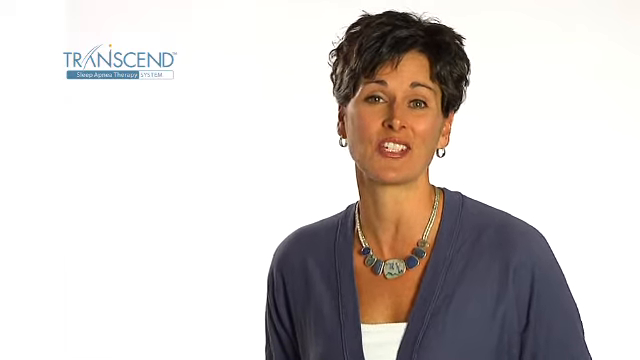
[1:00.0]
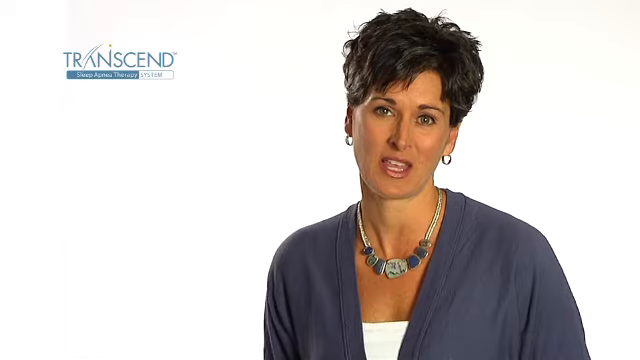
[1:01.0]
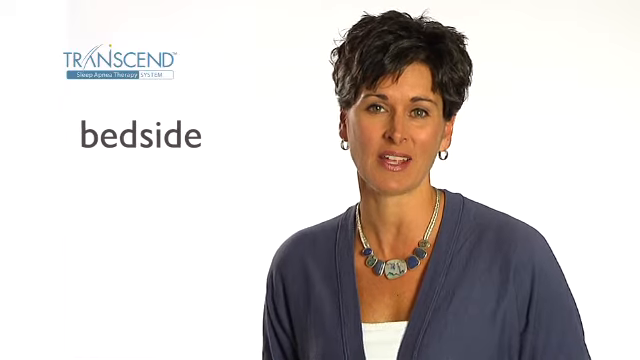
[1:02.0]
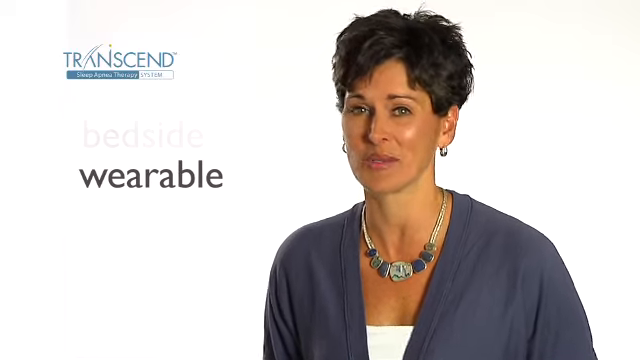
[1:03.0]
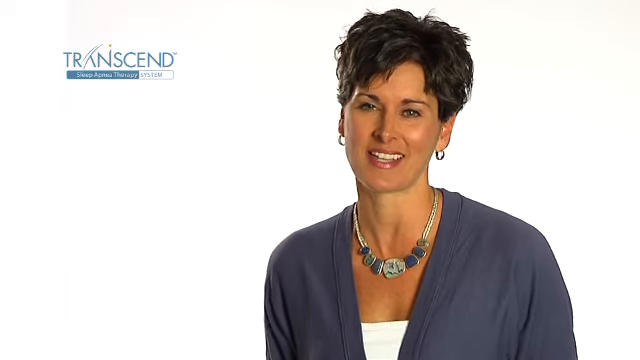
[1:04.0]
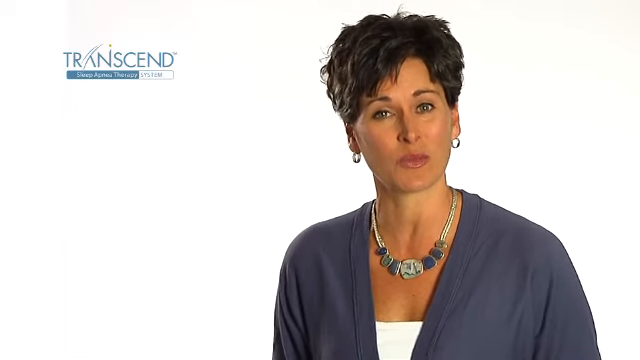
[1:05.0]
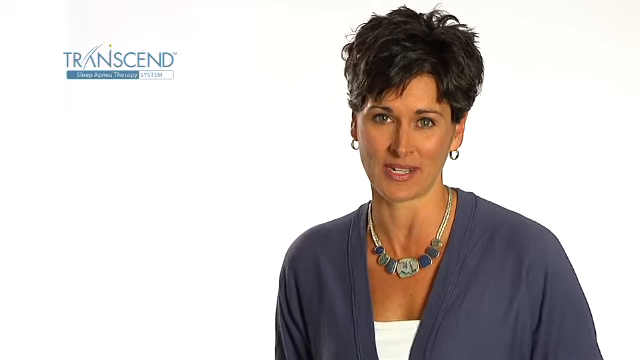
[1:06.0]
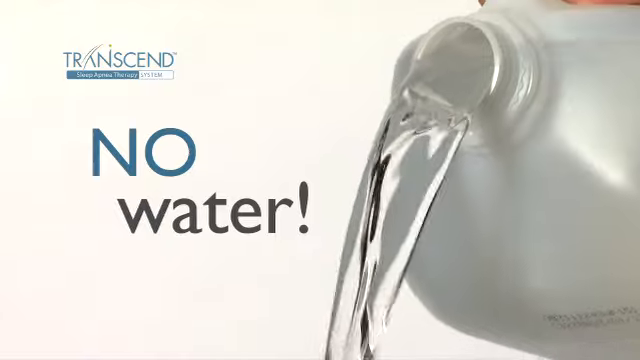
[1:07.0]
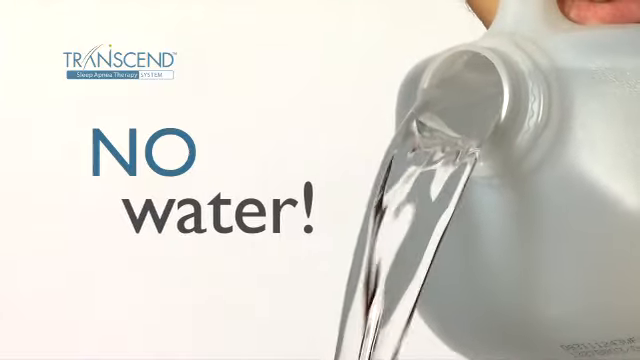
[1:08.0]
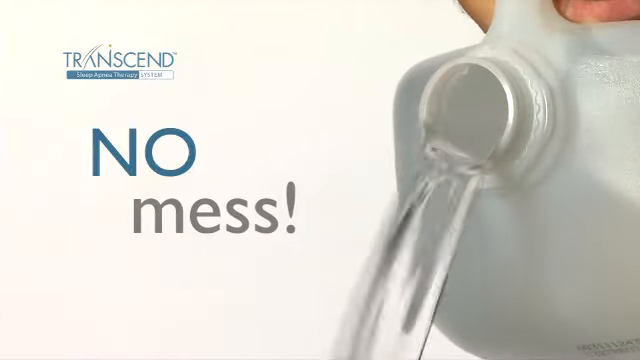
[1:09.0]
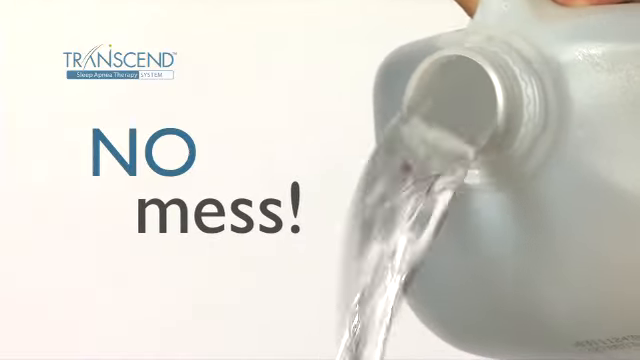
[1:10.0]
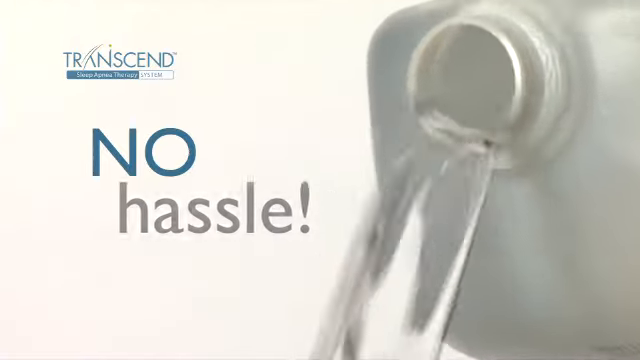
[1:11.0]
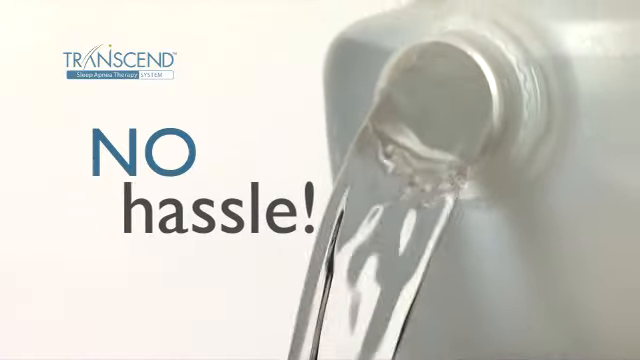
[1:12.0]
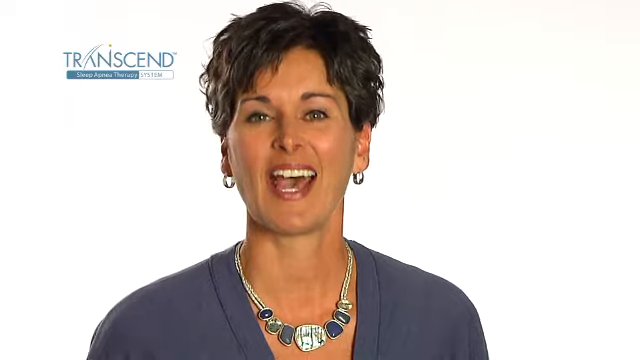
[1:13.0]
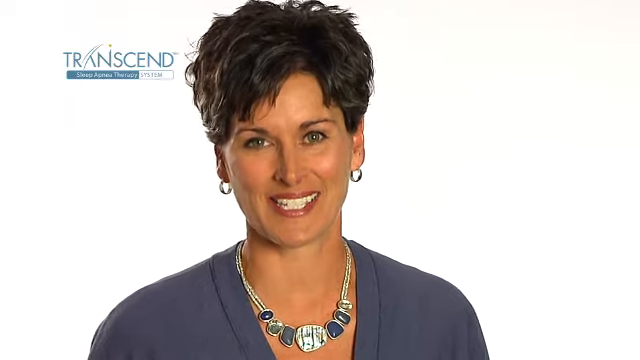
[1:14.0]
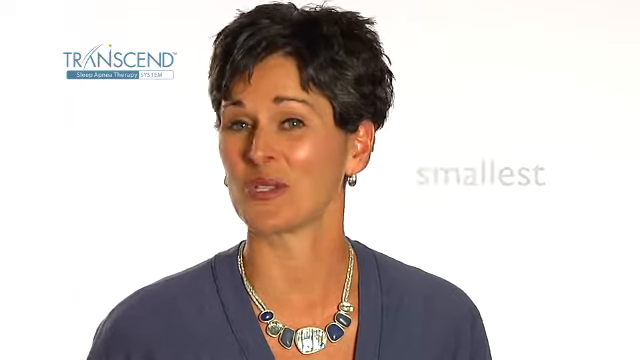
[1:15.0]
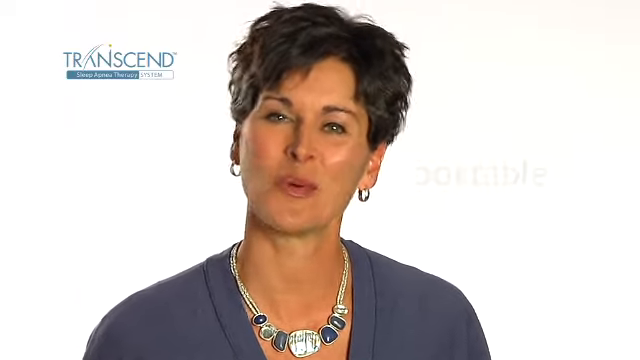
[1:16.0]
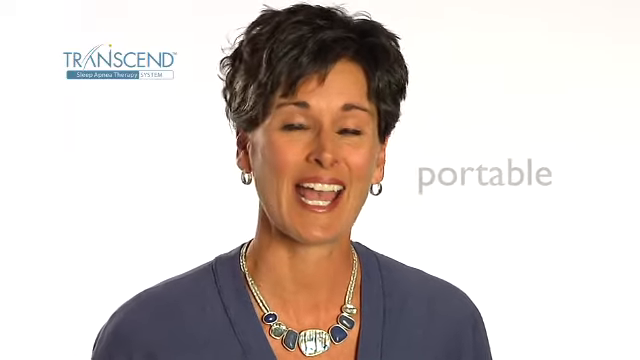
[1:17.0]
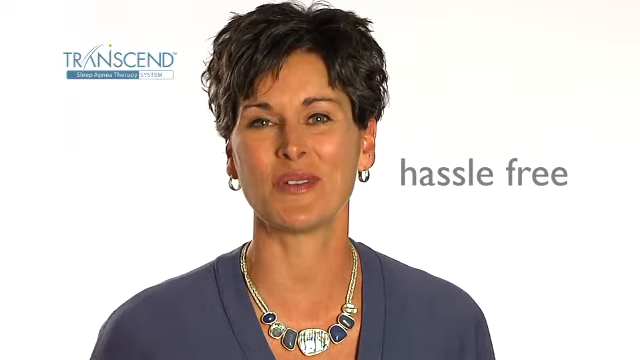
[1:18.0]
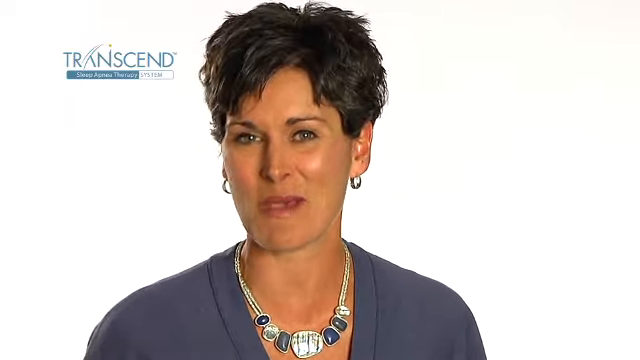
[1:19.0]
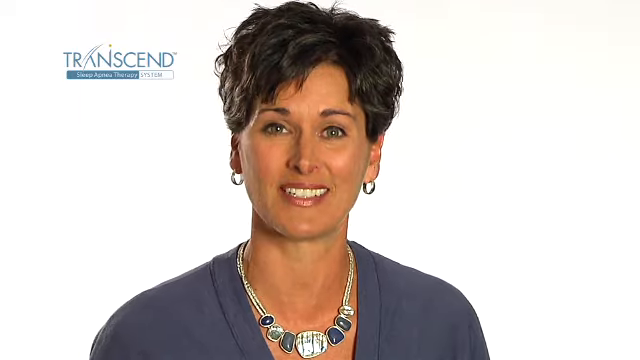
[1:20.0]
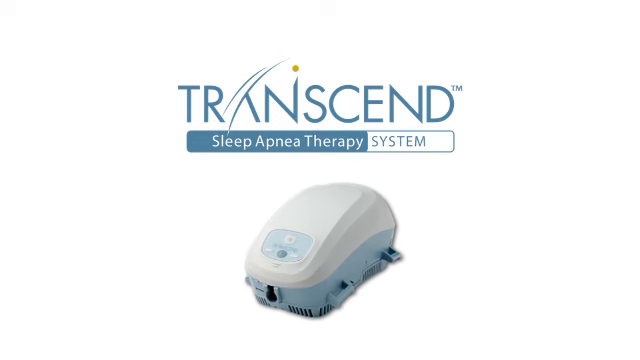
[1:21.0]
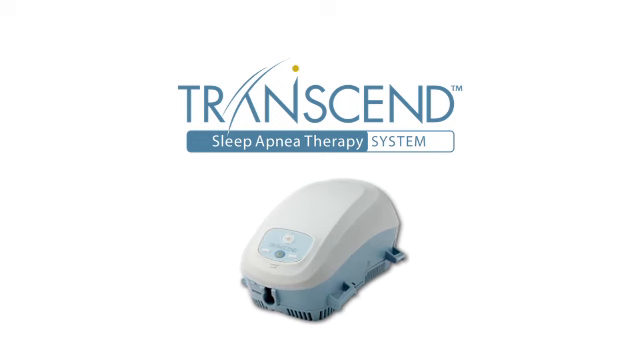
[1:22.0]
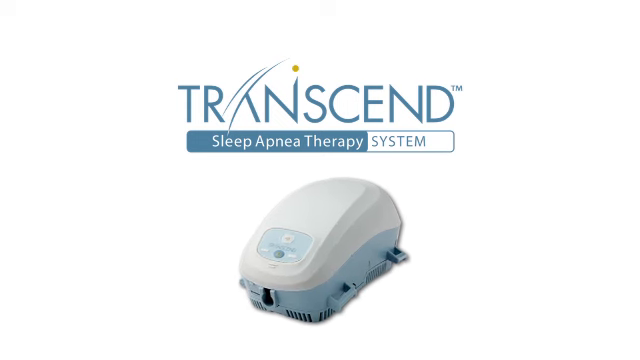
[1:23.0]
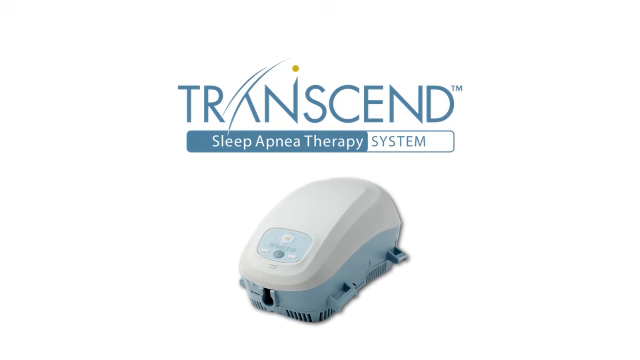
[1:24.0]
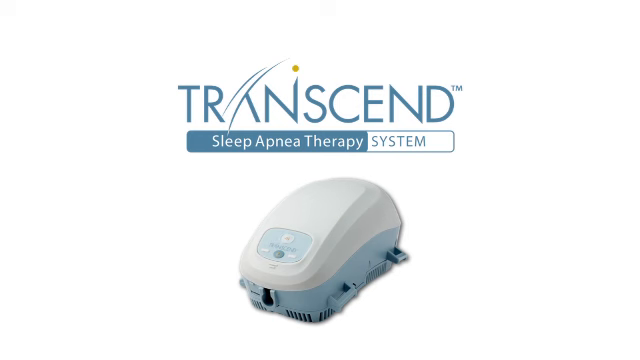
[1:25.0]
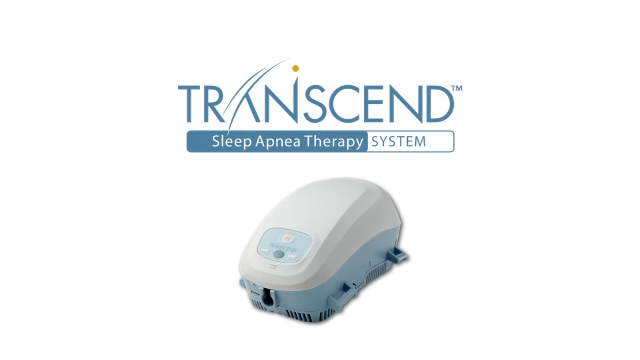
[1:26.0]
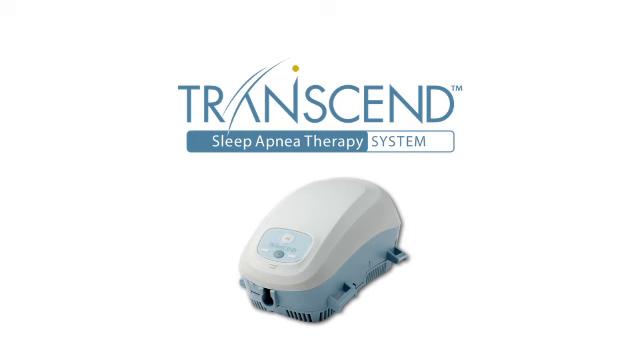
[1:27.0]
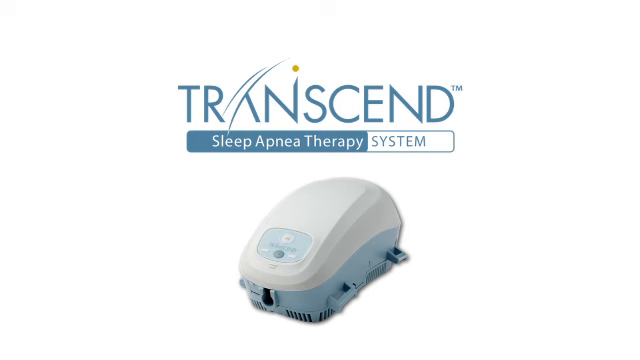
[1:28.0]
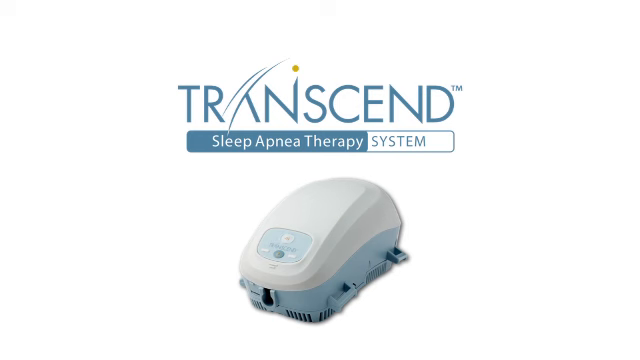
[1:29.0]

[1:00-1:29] An olive-skinned woman with short, layered brown hair and hazel-colored eyes appears on the screen. She wears glistening rose-colored lipstick, small delicate double hoops, and a chunky silver necklace with alternating black, grey and mother-of-pearl stones. She has on a dark gray knit jacket with a white shell underneath. She presents the features and benefits of the Transcend Sleep Apnea Therapy System: it can be used by your bedside, it is easily wearable, there is no mess and no water needed, and it is one of the smallest sleep apnea devices on the market and is portable. The top portion of the device is curved and white, and the bottom portion is light blue.